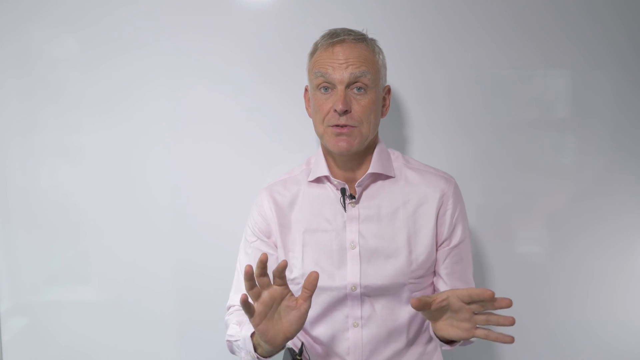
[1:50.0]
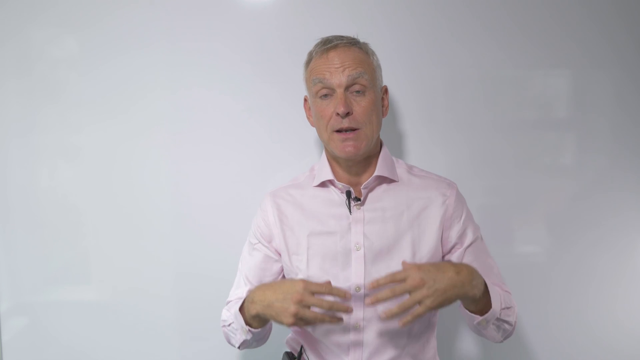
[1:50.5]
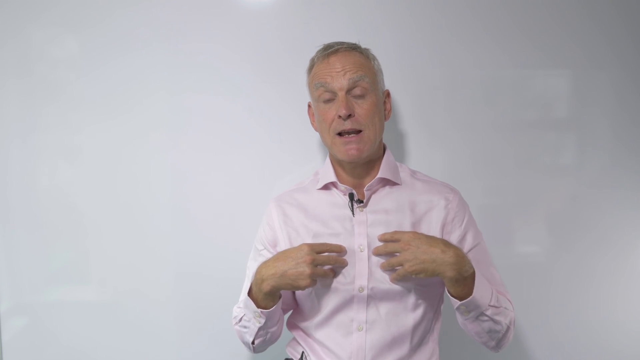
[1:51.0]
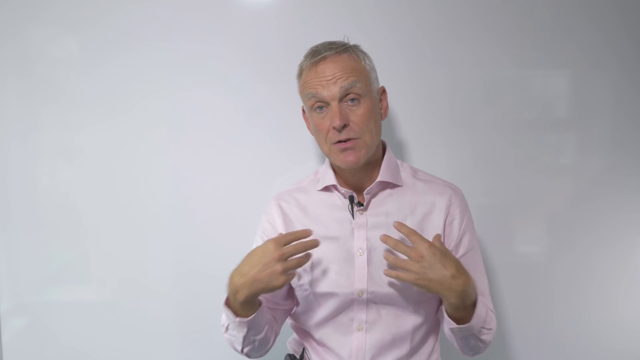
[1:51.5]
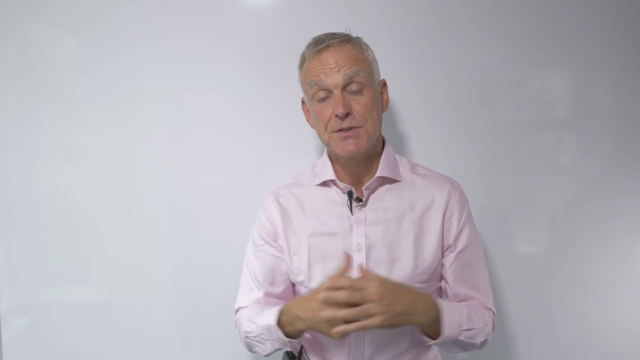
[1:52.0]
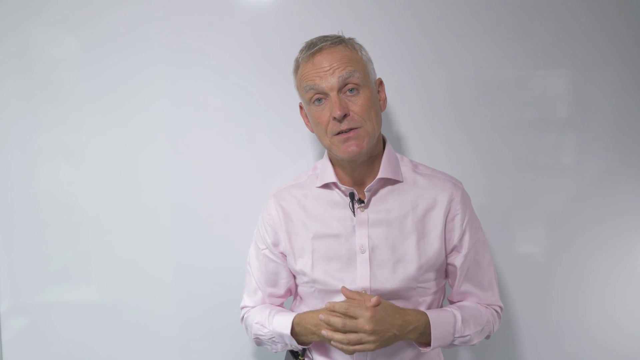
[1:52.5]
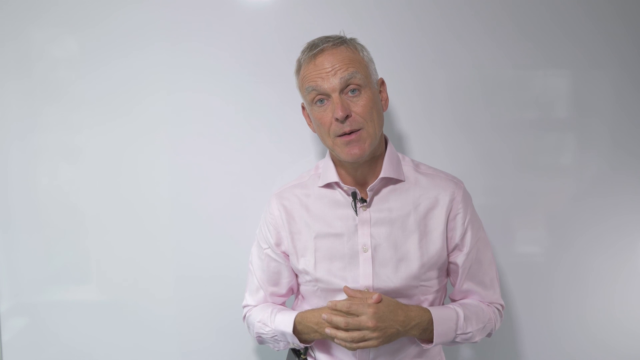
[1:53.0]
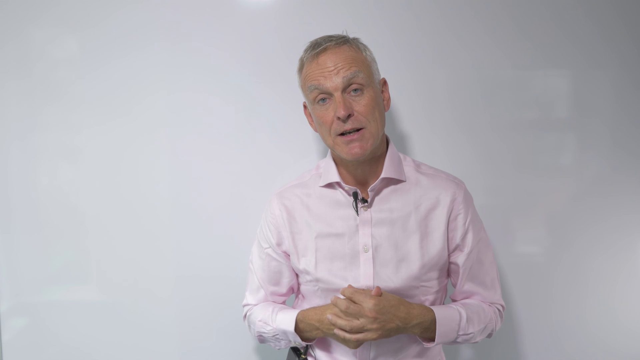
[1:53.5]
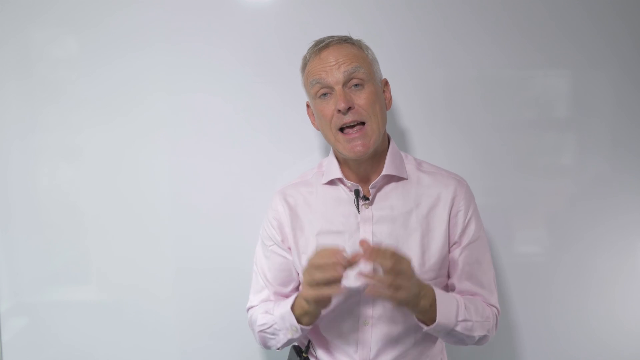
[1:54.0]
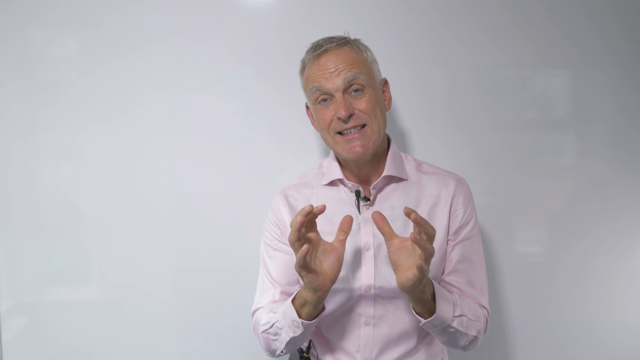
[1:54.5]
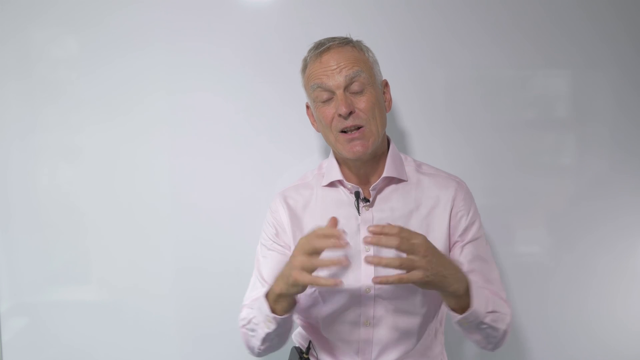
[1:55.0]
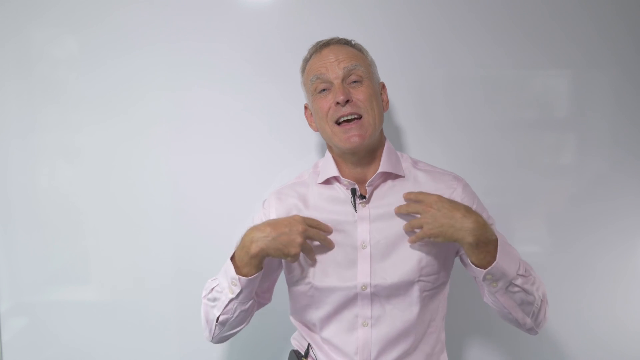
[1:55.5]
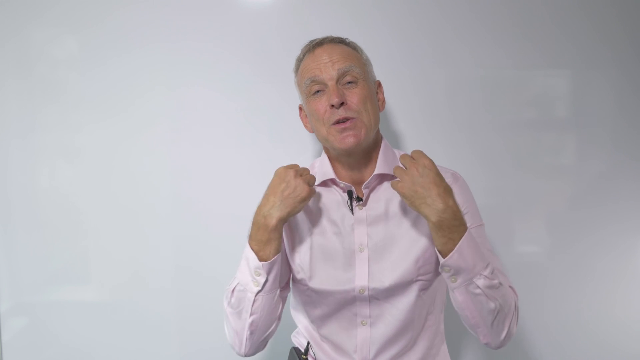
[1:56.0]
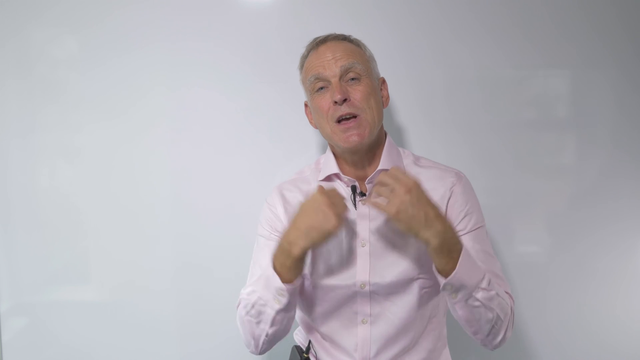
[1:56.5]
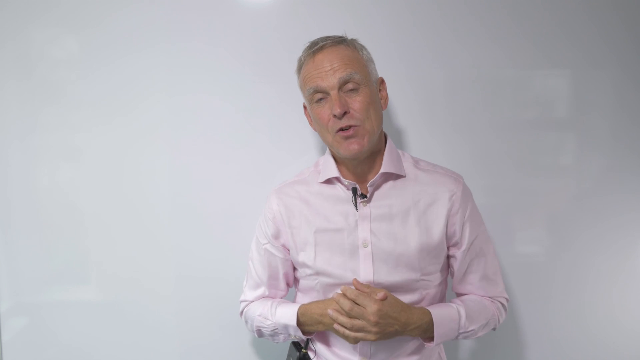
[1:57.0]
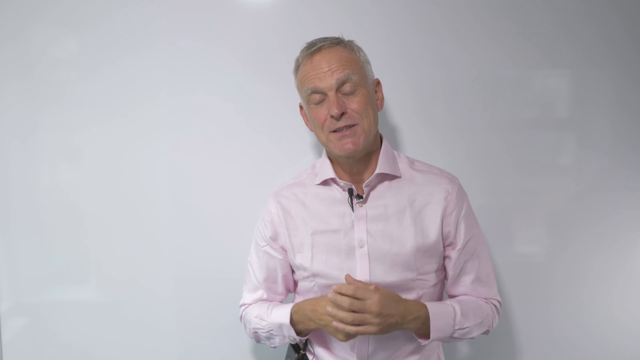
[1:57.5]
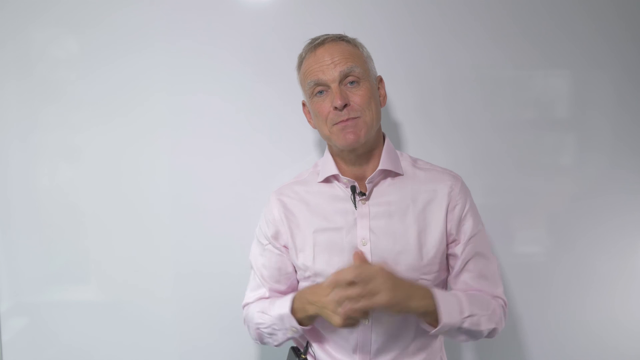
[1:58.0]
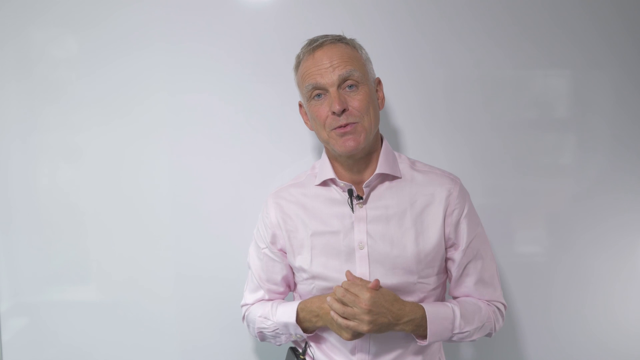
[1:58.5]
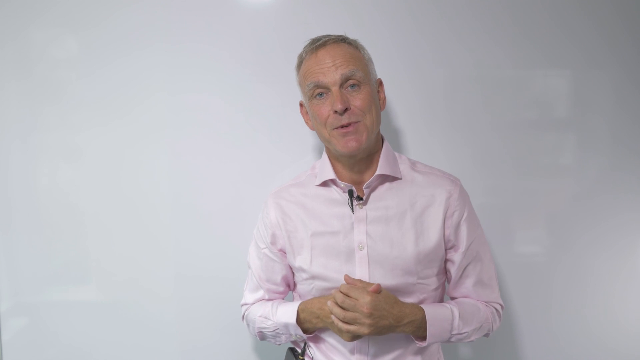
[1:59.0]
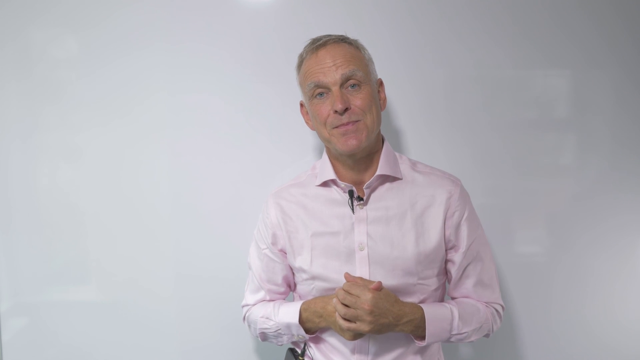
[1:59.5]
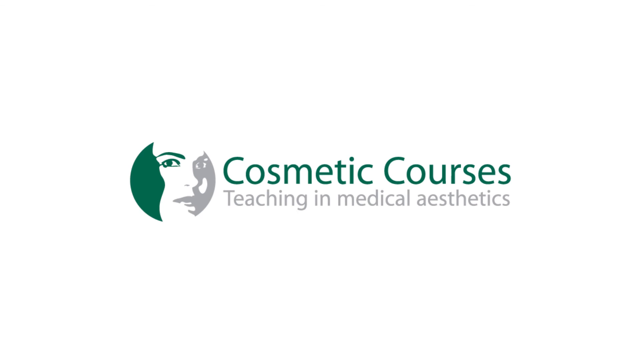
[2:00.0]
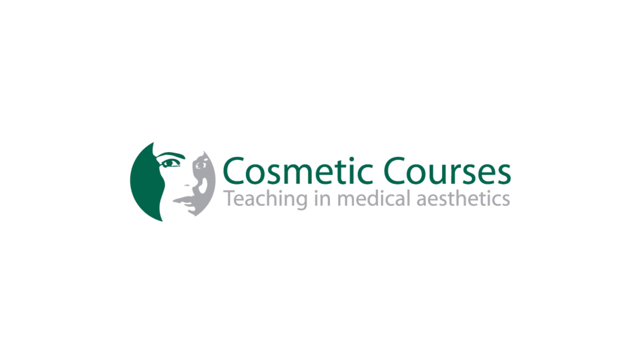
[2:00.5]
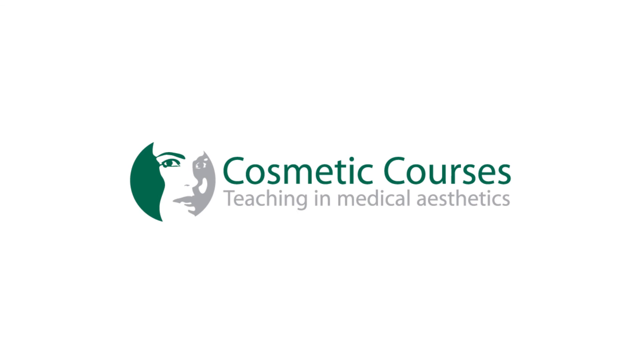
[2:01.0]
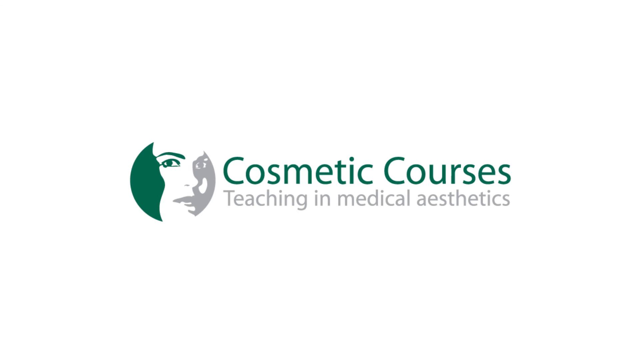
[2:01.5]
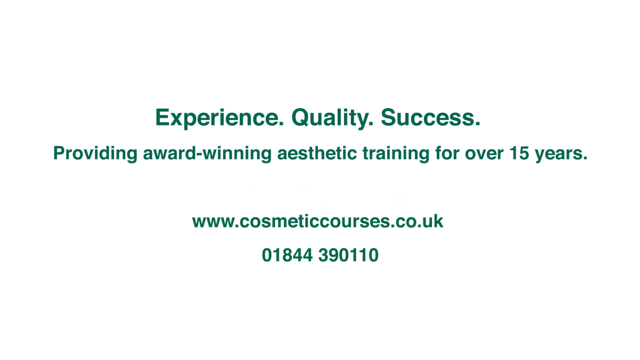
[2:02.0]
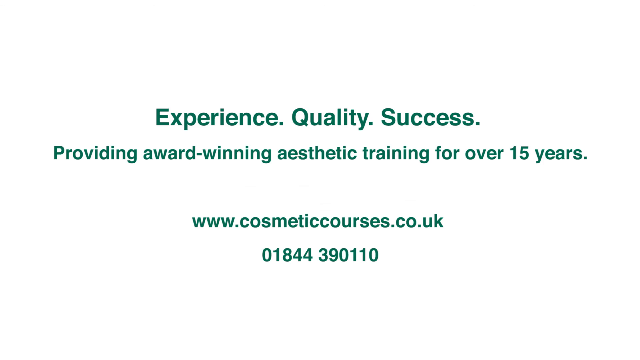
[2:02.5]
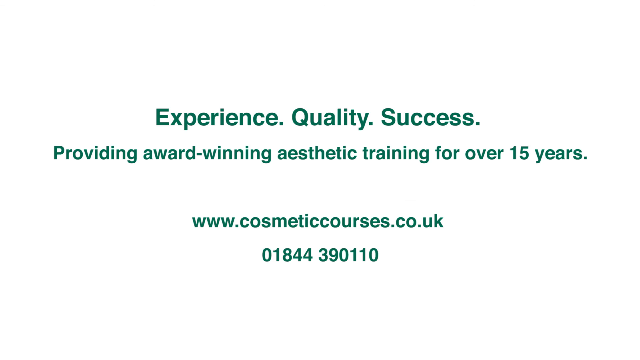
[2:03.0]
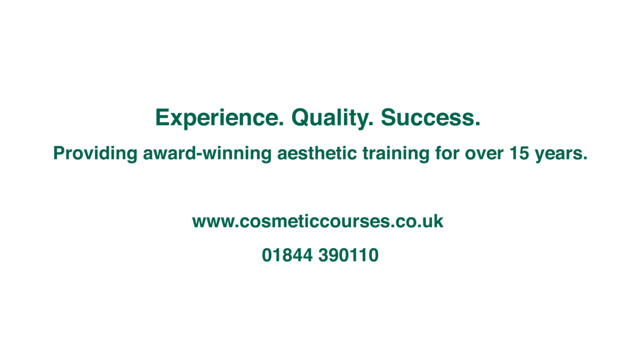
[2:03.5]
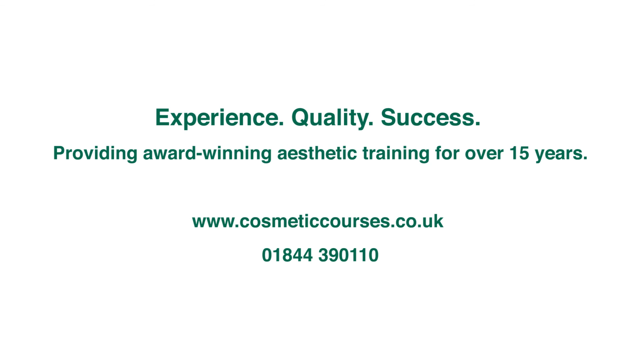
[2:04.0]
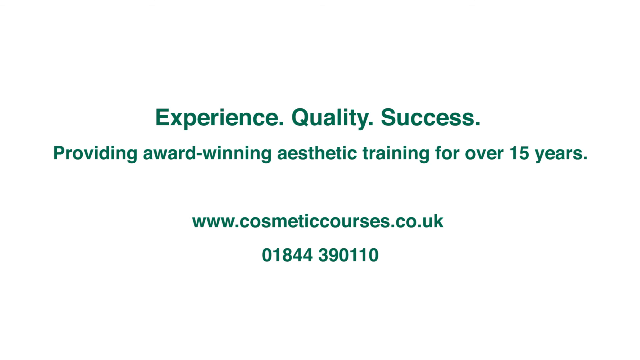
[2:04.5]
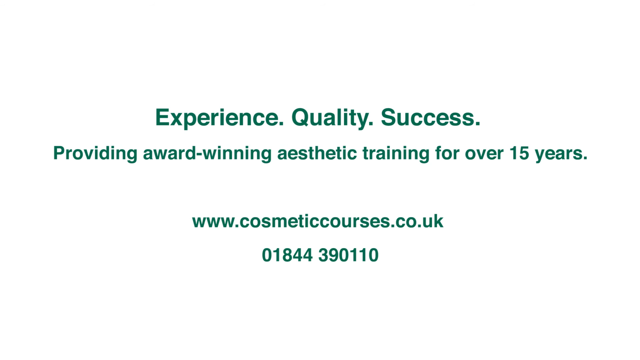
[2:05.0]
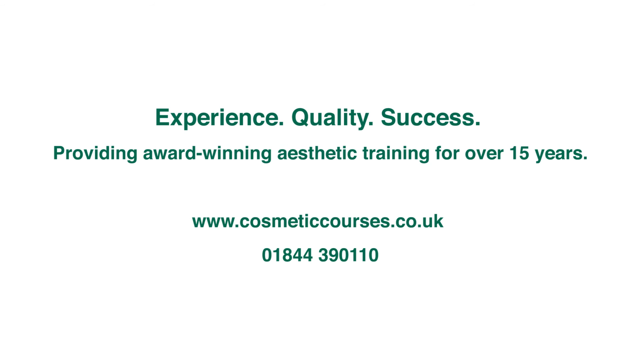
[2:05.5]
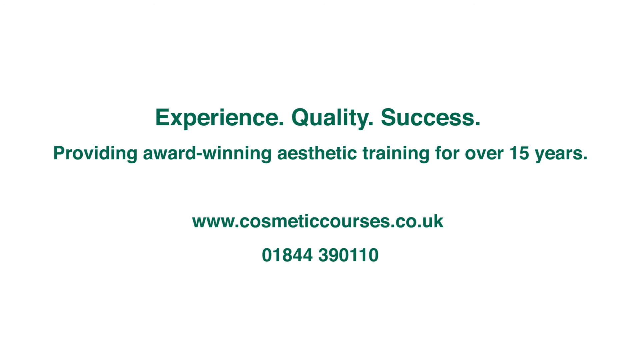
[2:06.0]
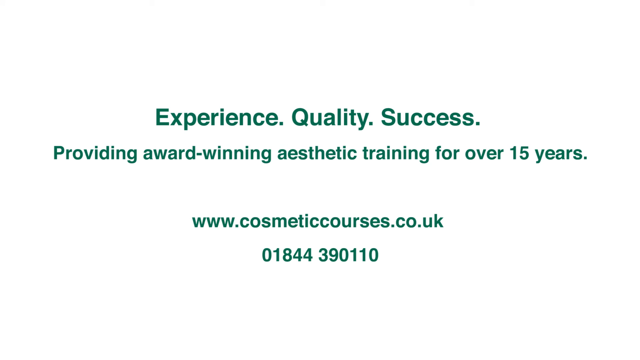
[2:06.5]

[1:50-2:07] The older, tall, thin white man in a light pink button-up shirt speaks to the camera. His gray hair is a little whiter on the sides and darker on top. He uses his hands a lot as he speaks, holding them up in front of him, gesturing to himself and clasping them in front of his stomach. The screen then changes to a white background with "Cosmetic Courses" in large dark green letters in the middle and "Teaching and Medical Aesthetics" in smaller light gray letters underneath. To the left is a circle icon that looks like a simple drawing of a close-up of a woman's face. The next slide also has a white background, with "experience, quality, success" in bold dark green font in the middle toward the top. Beneath it, in smaller font, is "providing award-winning aesthetic training for over 15 years," followed by the website link "www.cosmeticcourses.co.uk" and the phone number "01844 390110."